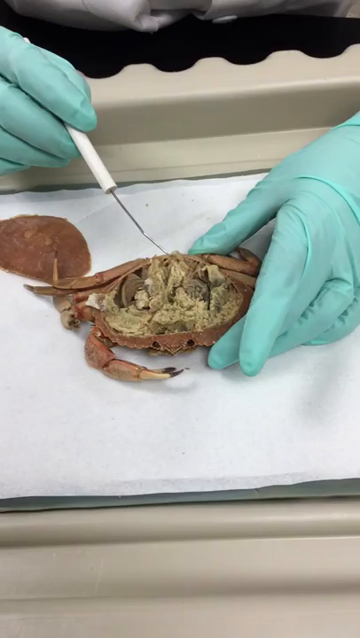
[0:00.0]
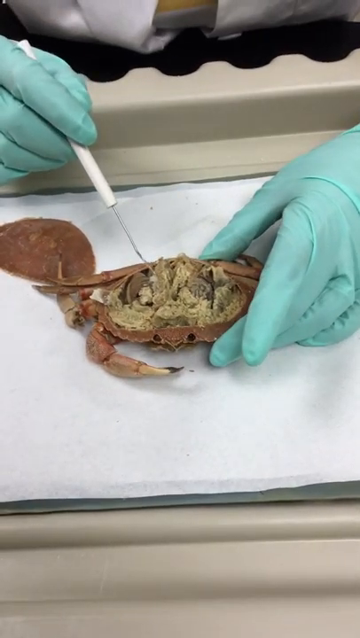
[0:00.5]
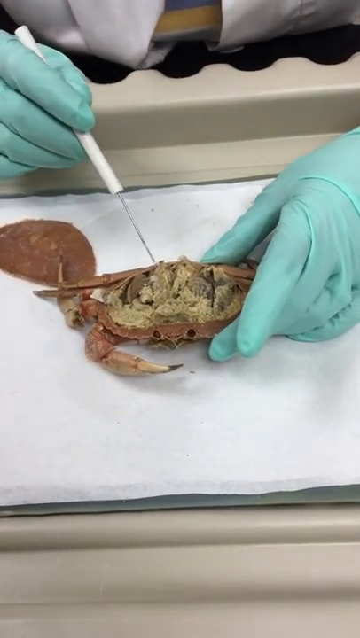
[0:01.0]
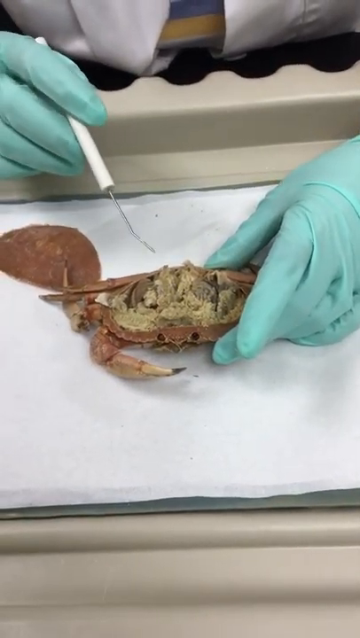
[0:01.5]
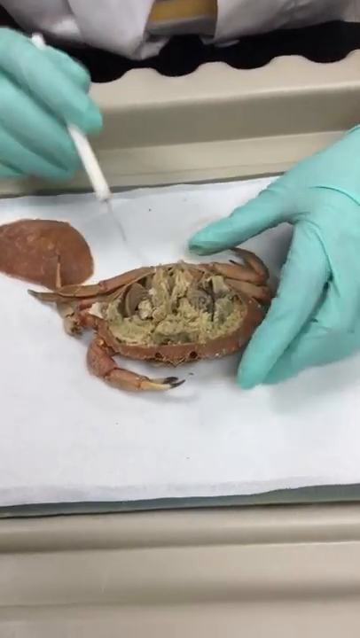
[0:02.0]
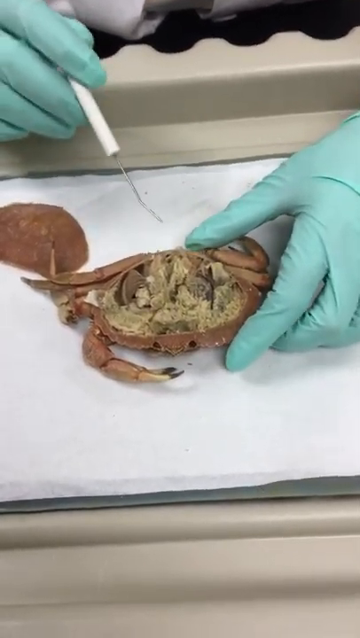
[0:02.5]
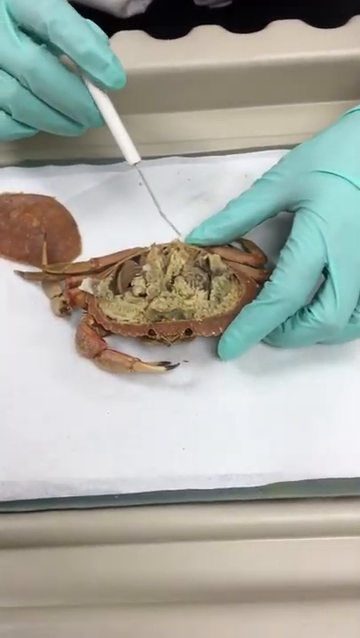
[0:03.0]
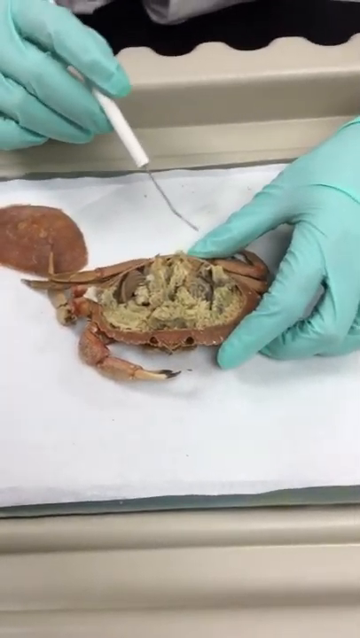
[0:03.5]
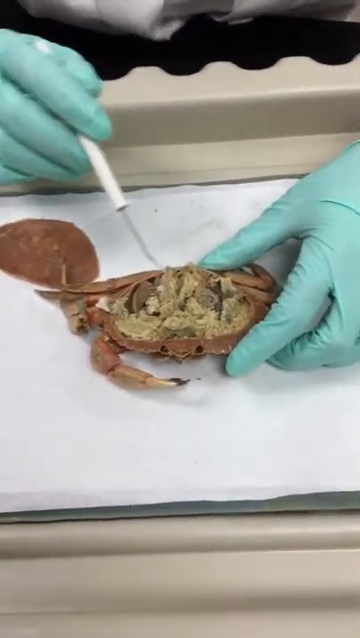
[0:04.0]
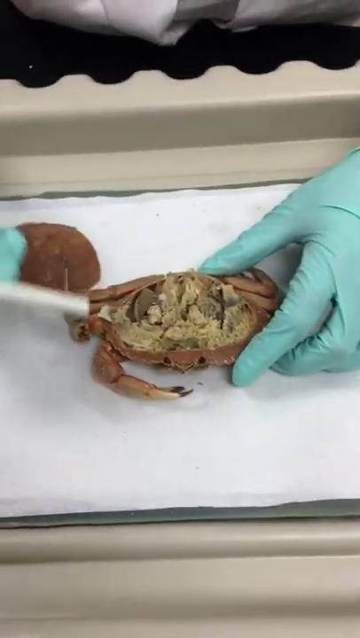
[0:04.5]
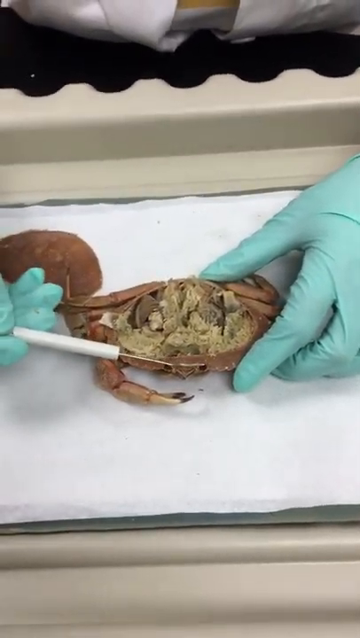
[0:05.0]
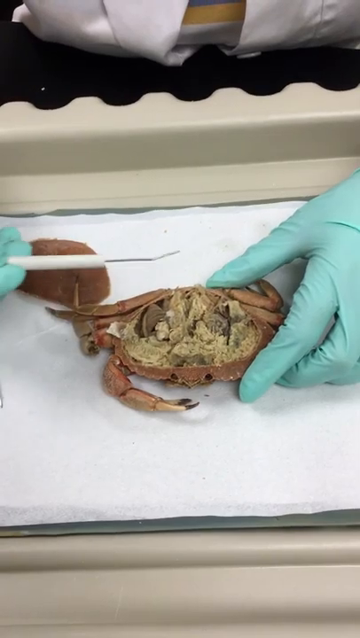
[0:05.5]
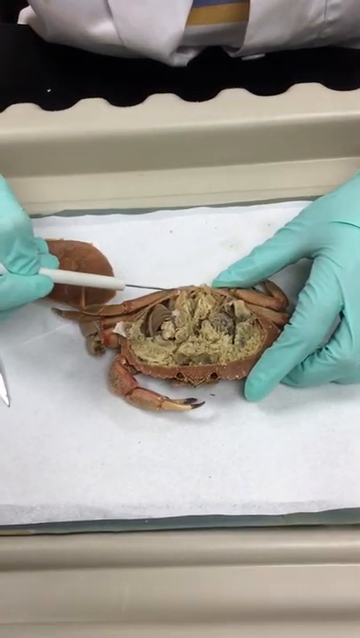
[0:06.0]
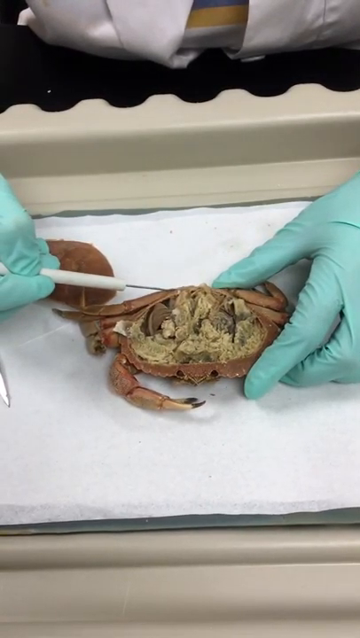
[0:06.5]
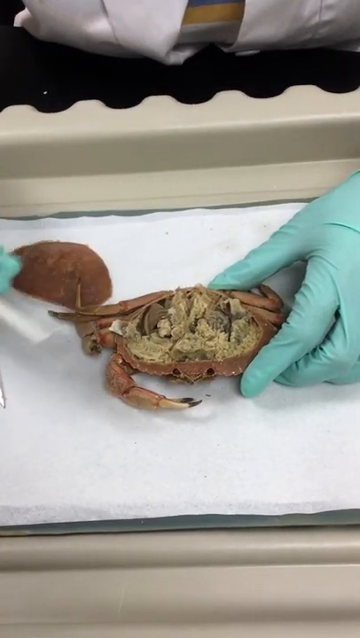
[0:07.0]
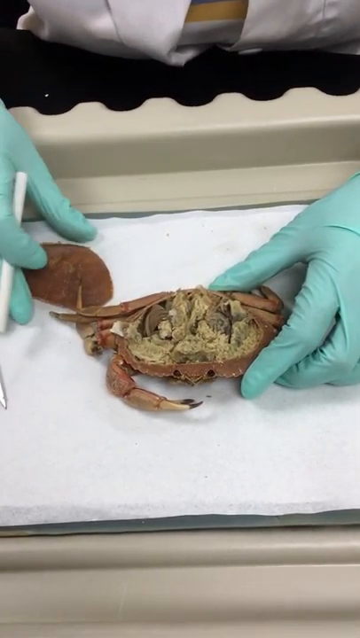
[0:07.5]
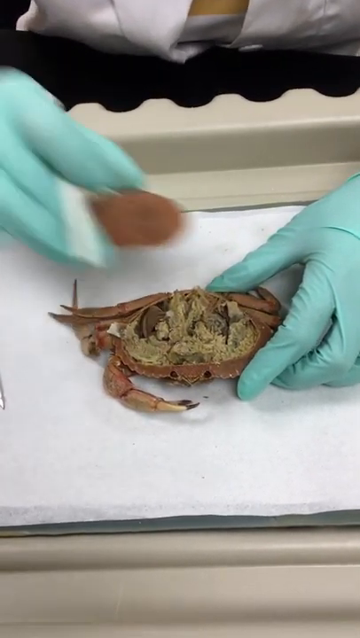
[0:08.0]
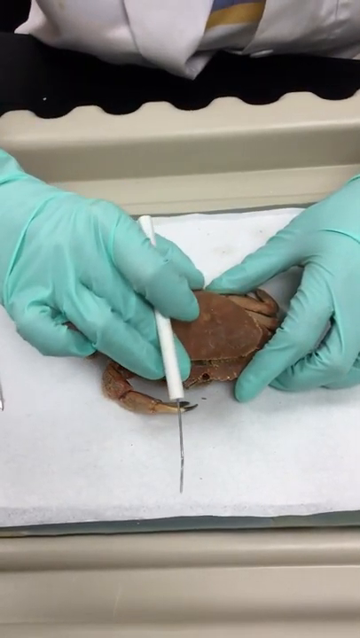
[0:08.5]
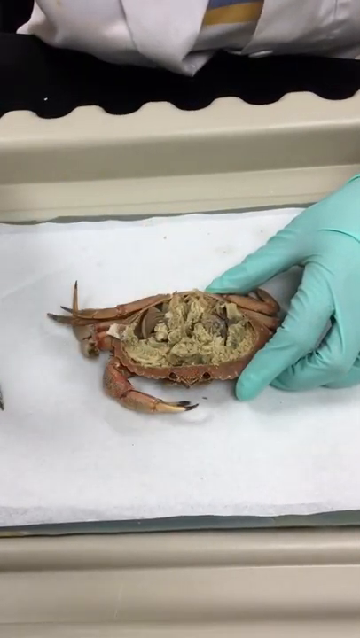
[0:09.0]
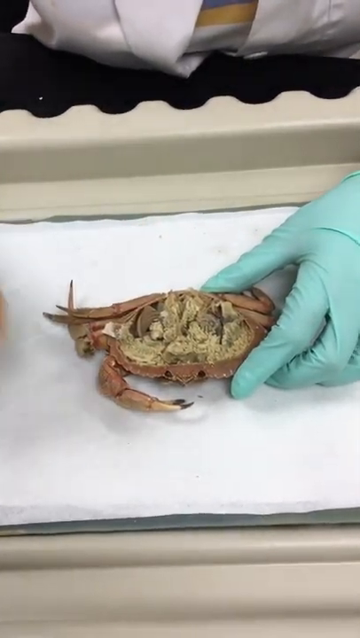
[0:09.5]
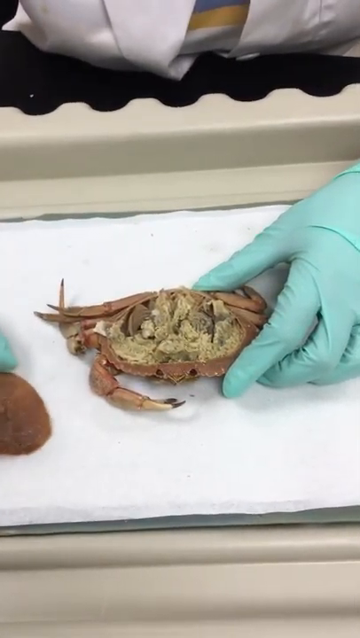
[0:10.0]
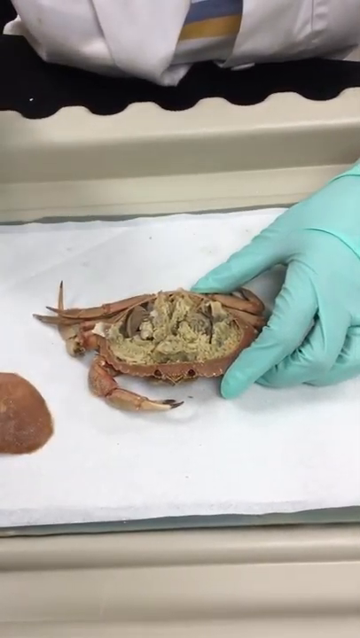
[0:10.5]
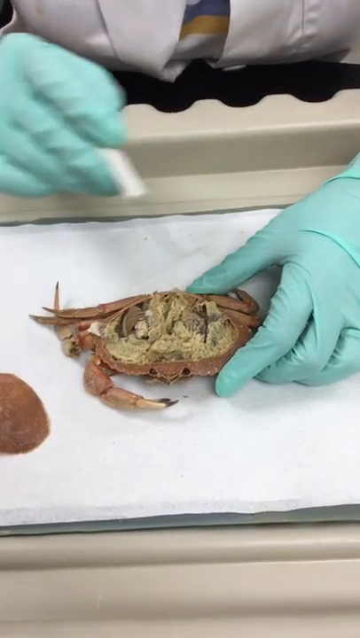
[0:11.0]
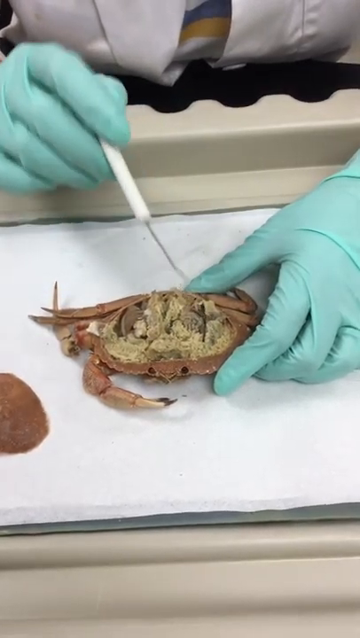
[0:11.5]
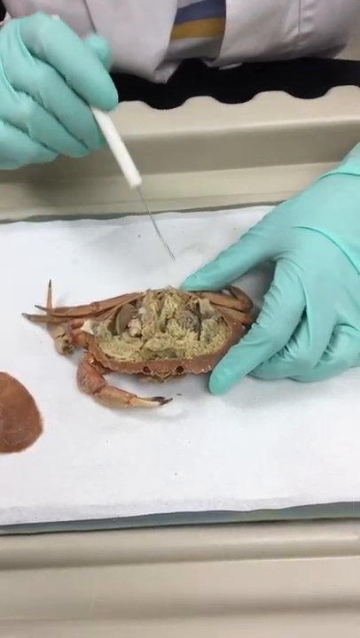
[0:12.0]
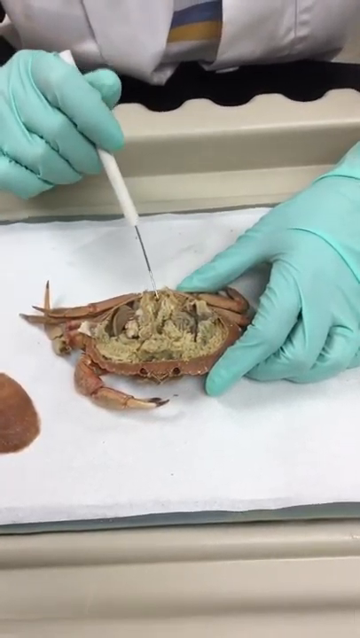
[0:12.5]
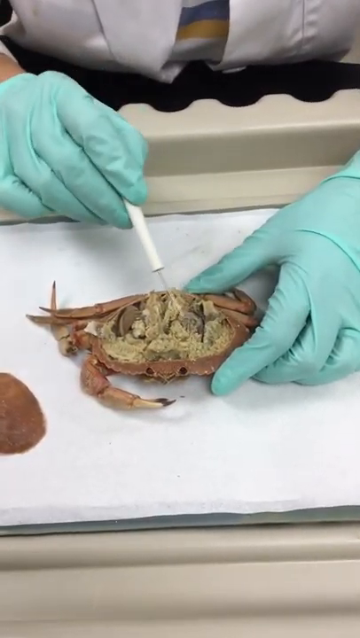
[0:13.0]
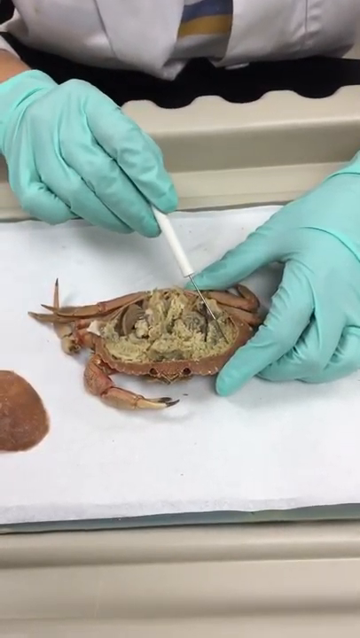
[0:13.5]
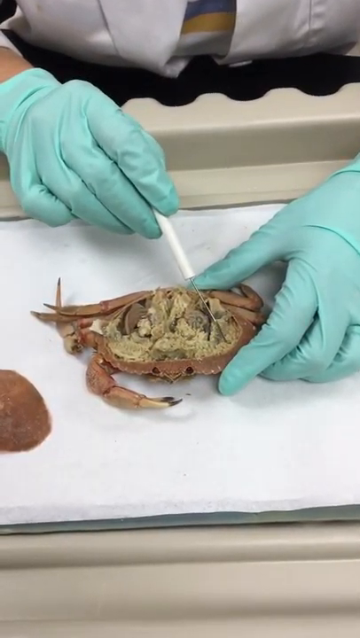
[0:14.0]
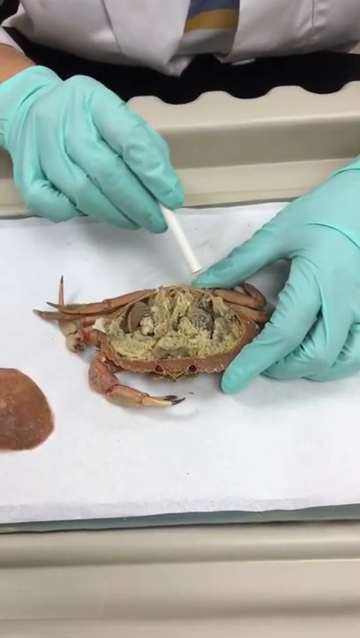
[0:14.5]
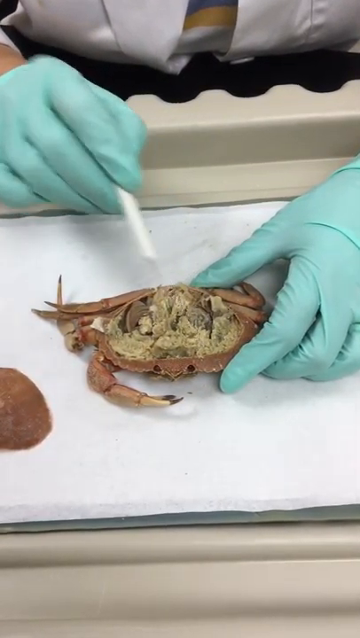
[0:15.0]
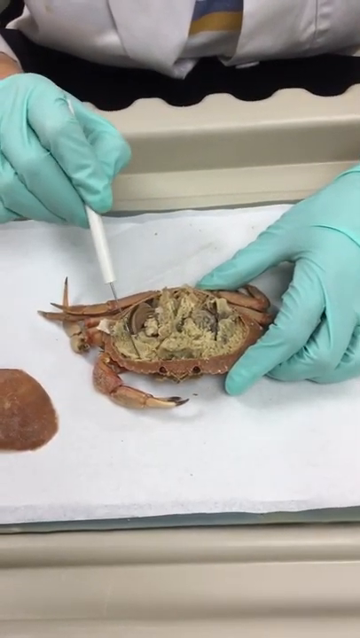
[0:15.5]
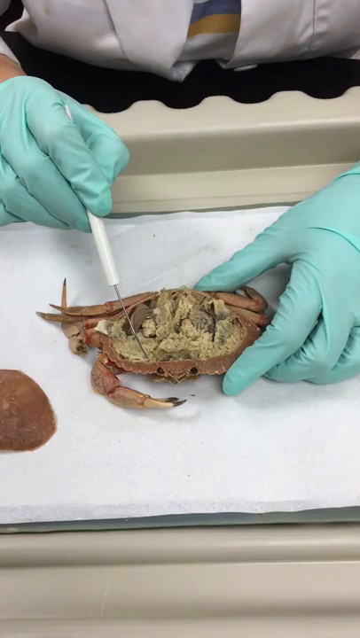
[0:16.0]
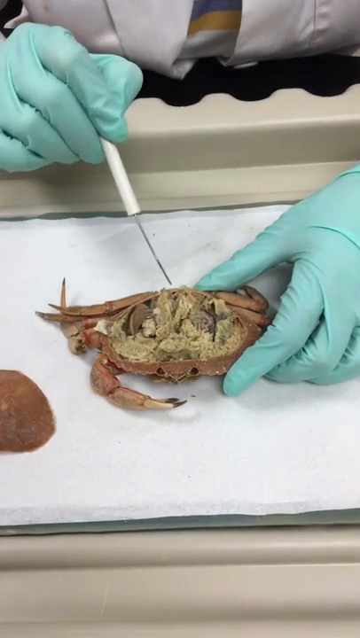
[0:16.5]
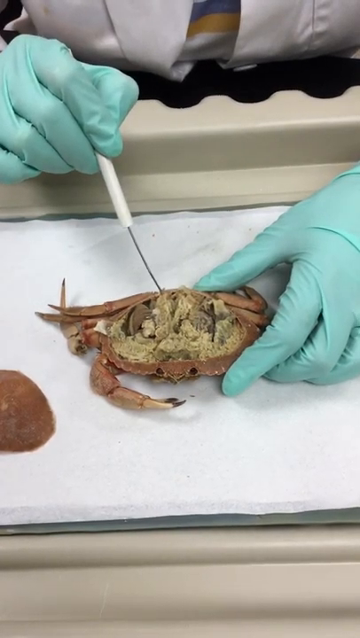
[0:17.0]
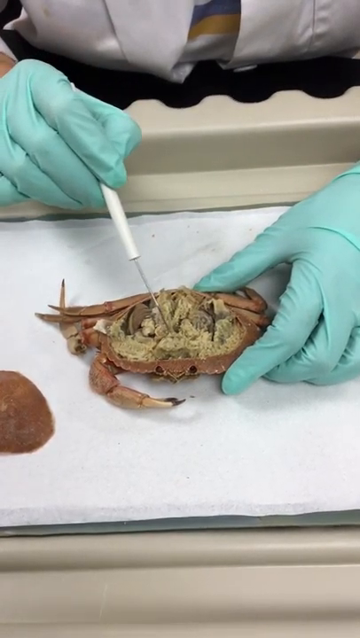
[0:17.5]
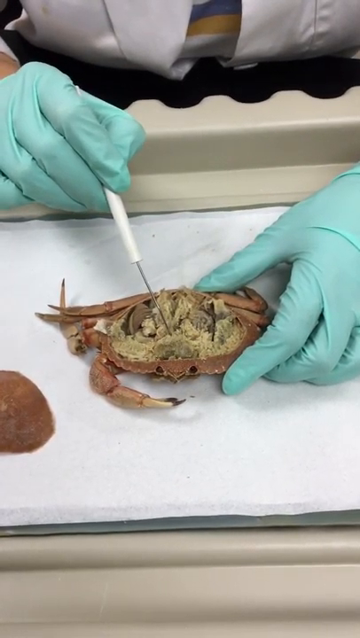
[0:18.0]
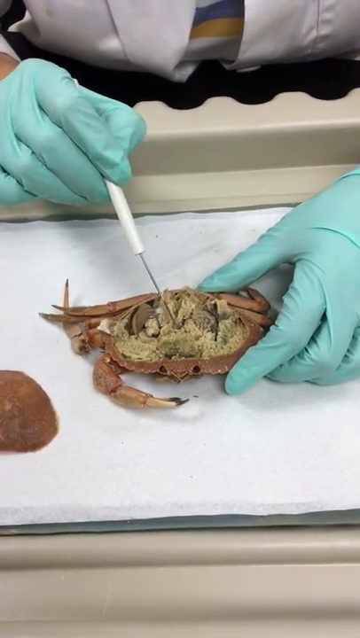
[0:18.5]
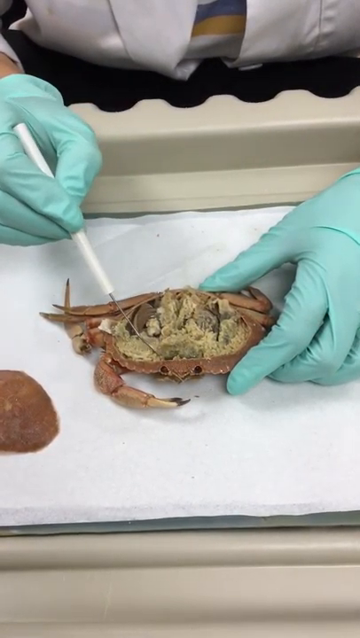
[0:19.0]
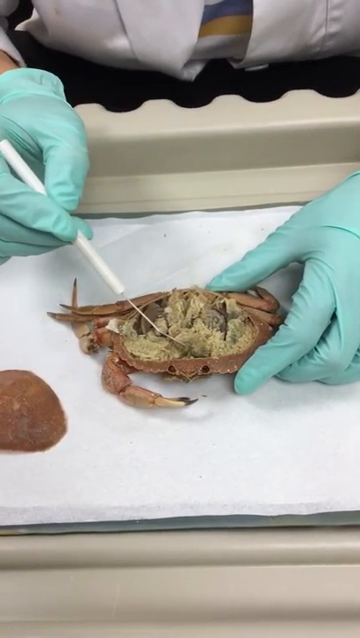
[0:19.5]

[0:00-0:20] A crab is being dissected on white absorbent paper. The top of the crab's carapace has been removed; otherwise the crab is intact. The dissector wears teal gloves and holds a pointy instrument with a yellow plastic handle and a long metal poke, probing the tissue inside the crab. The setting is a well-lit lab with an off-cream table. The dissector wears a white lab coat with some kind of t-shirt underneath and appears to be Caucasian; just a bit of the dissector's right wrist is visible in the upper left corner of the frame. The crab faces forward toward the camera with its right claw extended out, while the left claw is tucked under and not really visible. The legs are folded up under to the backside, and both of the crab's eyes are visible. The tissue inside the crab is an off-tan color and looks mostly like mush.